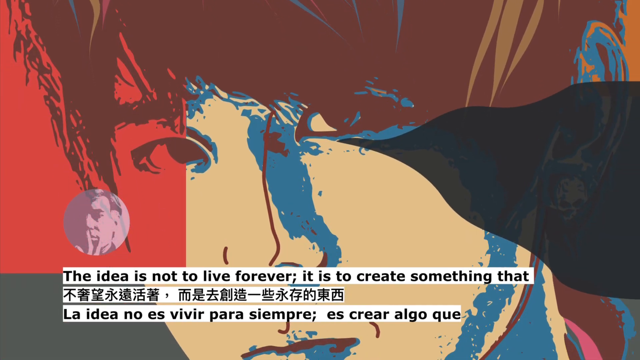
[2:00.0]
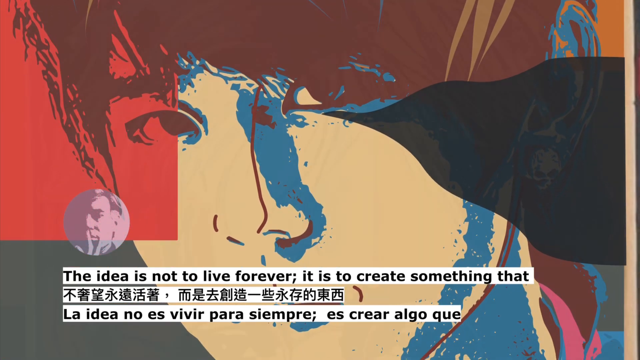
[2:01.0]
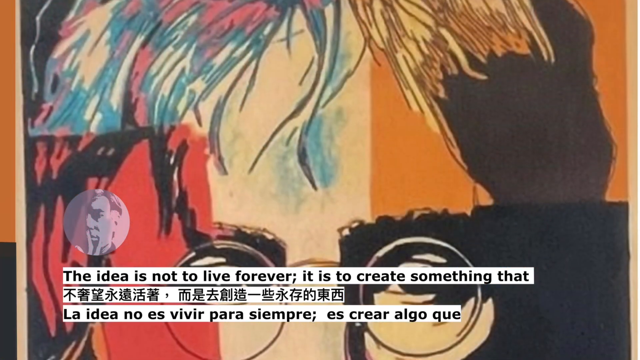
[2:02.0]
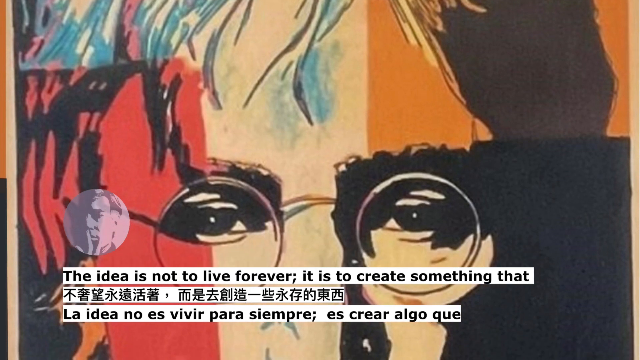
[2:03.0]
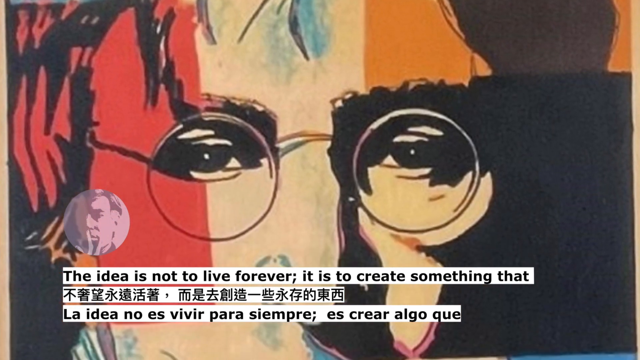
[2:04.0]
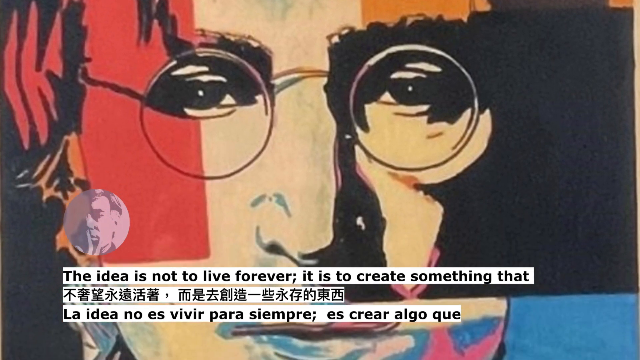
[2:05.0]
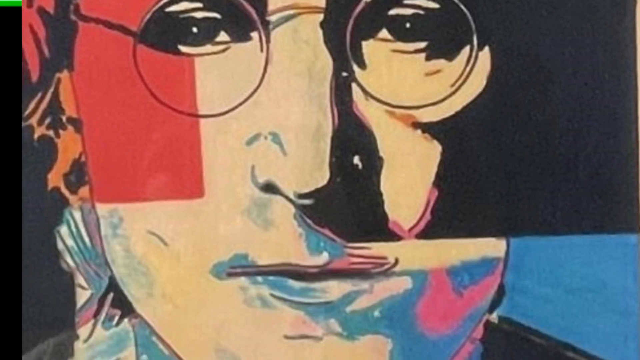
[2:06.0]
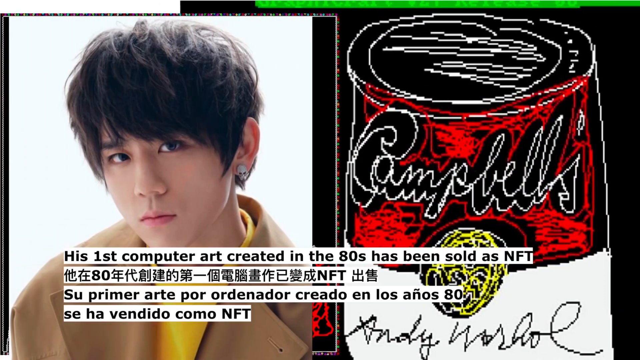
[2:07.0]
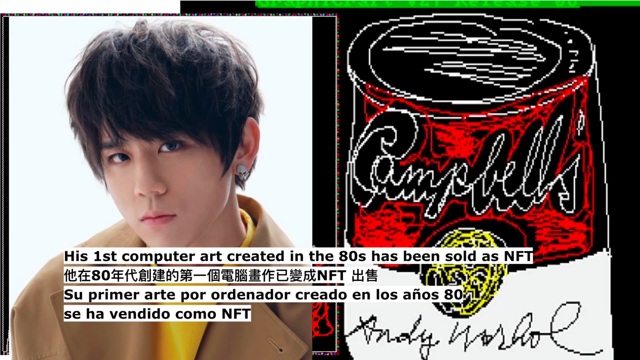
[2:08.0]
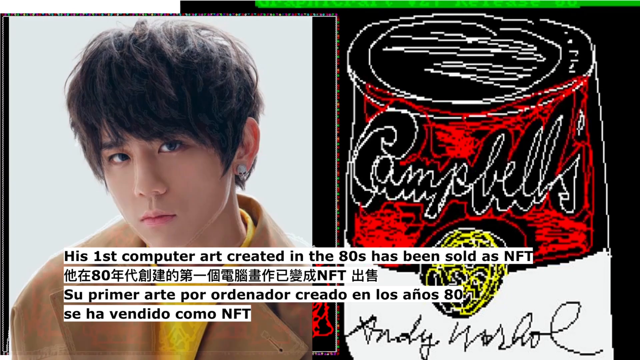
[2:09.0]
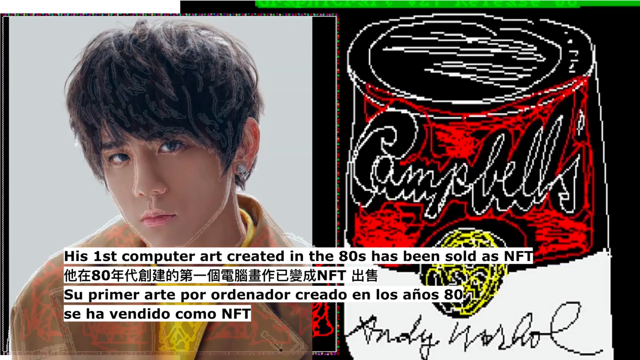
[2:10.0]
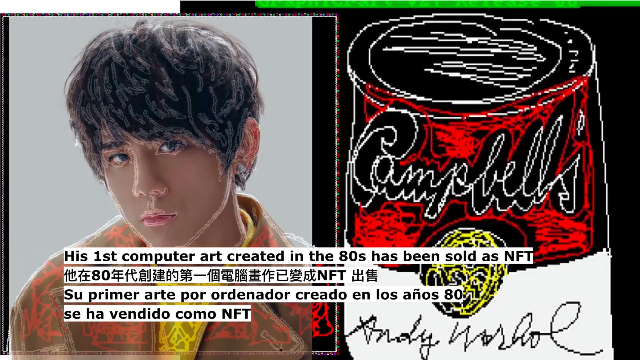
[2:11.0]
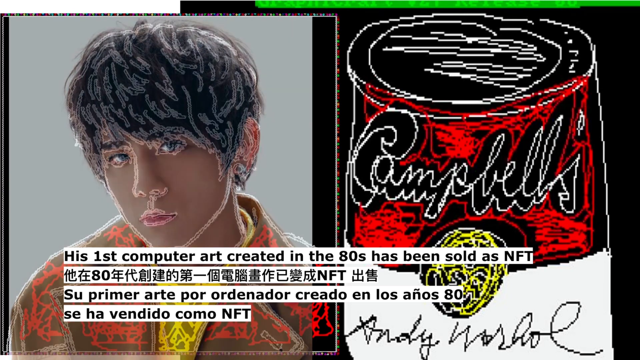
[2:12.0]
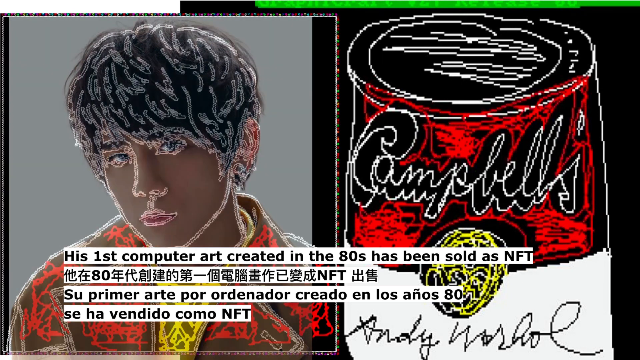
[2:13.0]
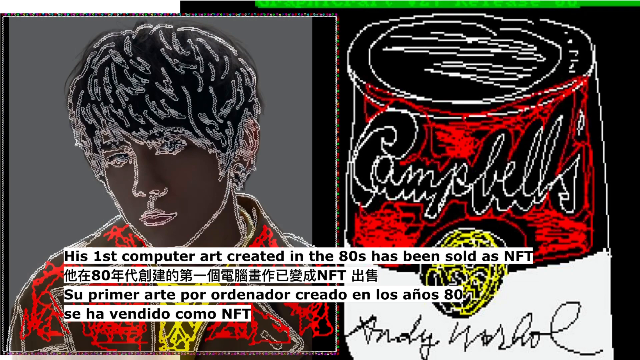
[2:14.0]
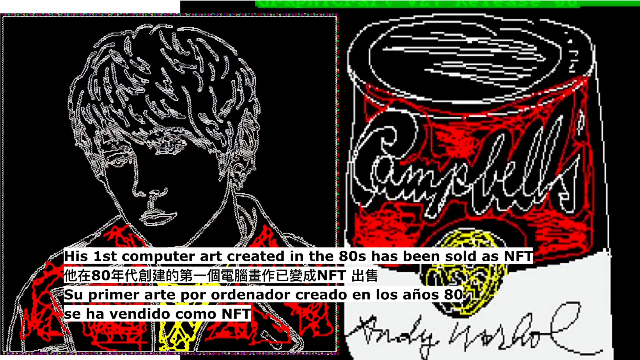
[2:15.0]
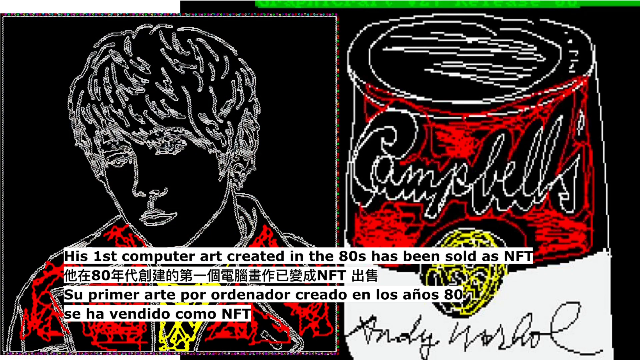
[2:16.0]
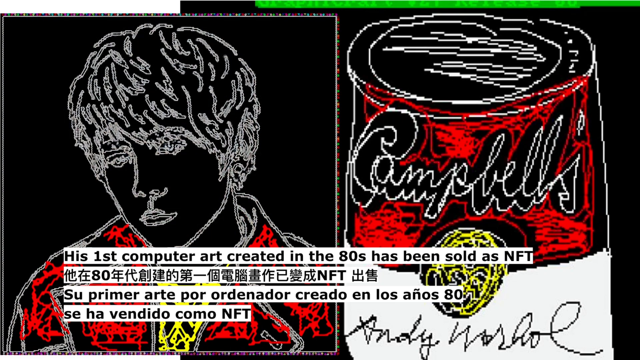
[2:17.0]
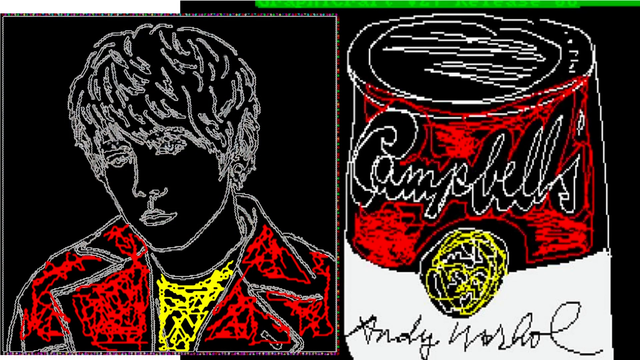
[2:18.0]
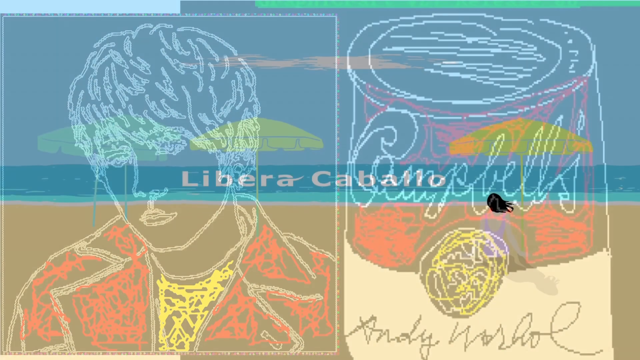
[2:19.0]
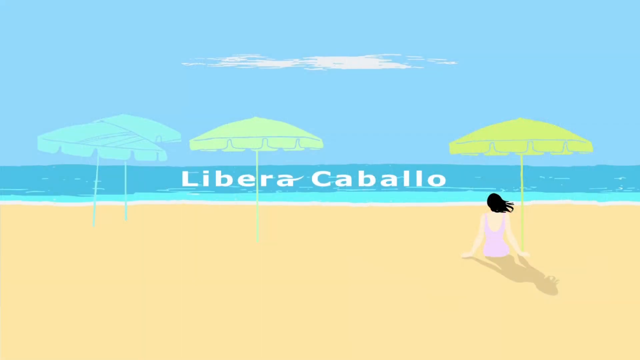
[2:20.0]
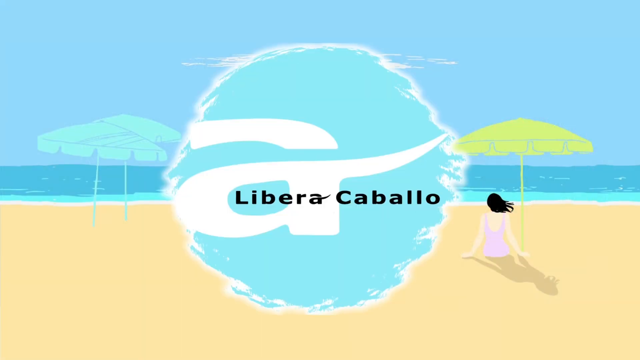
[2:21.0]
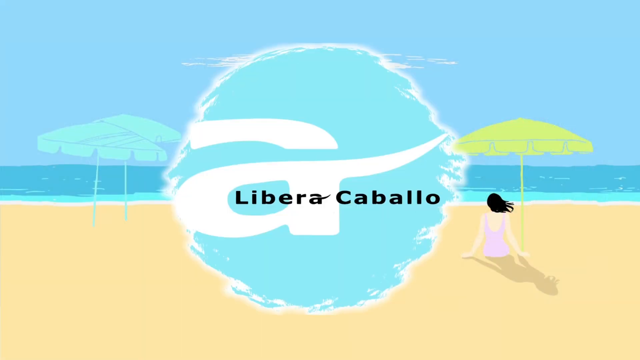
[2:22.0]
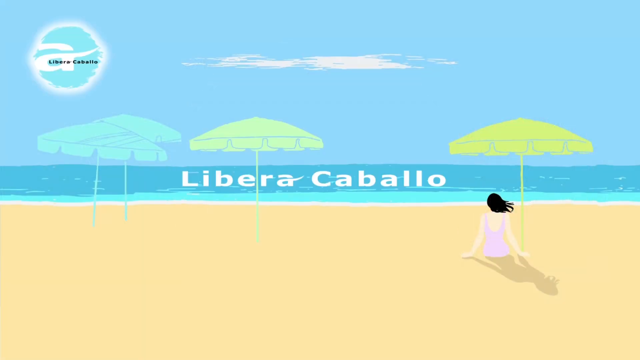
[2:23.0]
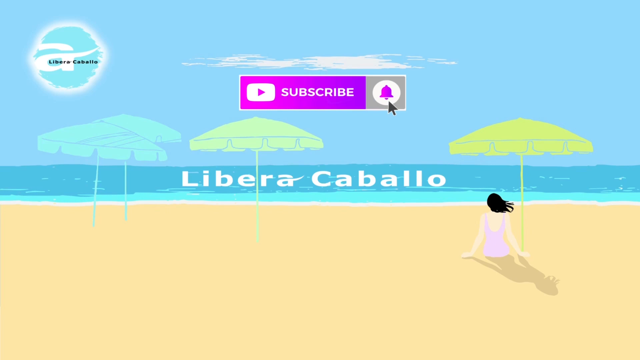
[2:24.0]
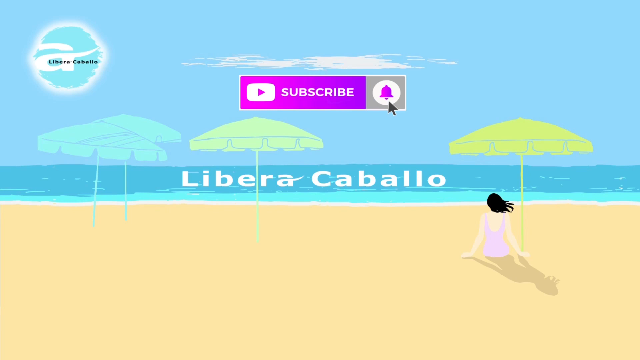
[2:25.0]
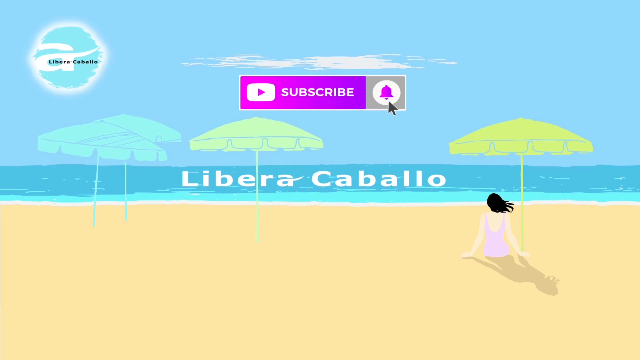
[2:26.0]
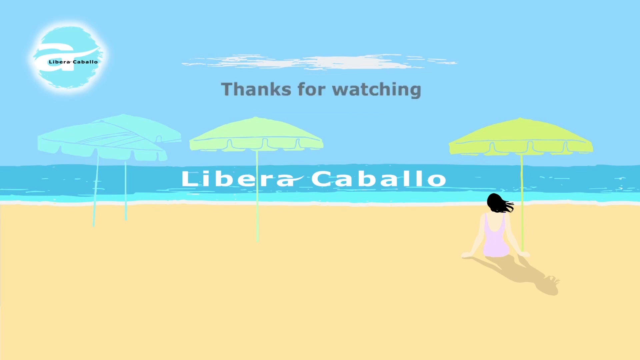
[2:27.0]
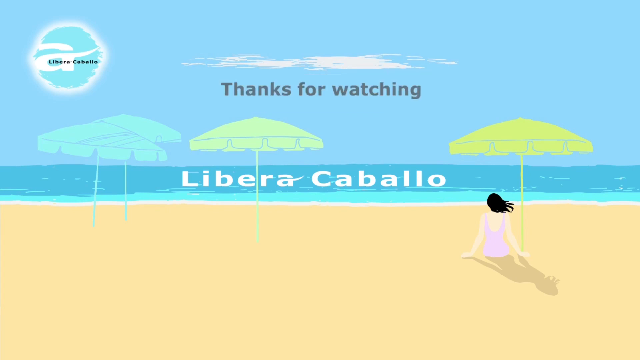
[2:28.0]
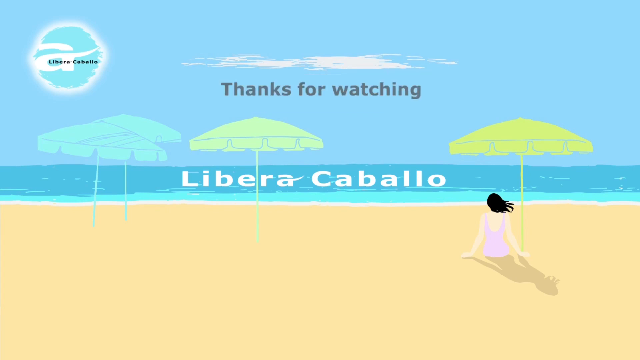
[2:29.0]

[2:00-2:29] An image of the Asian artist has black lettering underneath on a white background reading "the idea is not to live forever it is to create something that", with two separate languages below it reading the same thing. The purple circular outline of the artist's face is on the left. A red box on the left shows a black outline of the eyes, nose and mouth, yellow for the face, blue streak lines around the cheek, nose and right eye, and blue, red and beige colors on the hair. John Lennon with glasses is shown in a black outline in the same color variation, again with black wording on a white background reading "the idea is not to live forever it is to create something that" and the same wording in two separate languages underneath. The next image is an actual photograph of the Asian artist, with black hair, a roughly white complexion and black eyes; he has a silver skull on one of his ears and wears a yellow shirt and a light brown coat. Black lettering underneath on a white background reads "his first computer art created in the 80s has been sold as NFT". There is a white outline of a Campbell's soup can on a black background mixed with red, yellow circle lines, and "Andy Warhol" in black lettering on a white background at the bottom. This fades from color to black and white, with the jacket red and the inside shirt yellow with a white chalked outline. The next image is a cartoon of a yellow beach with a woman on the right side who has black hair and a pink swimsuit, a yellow umbrella beside her, and a gray shadow cast behind her. Three other umbrellas are to the left side, one green and the other two faded blue. There is a white outline of the beach, then light blue and then darker blue for the water, a lighter shade of blue for the sky, and a white cloud in the center. In the center of the water, white text reads "Liberia Cabela". A teal blue circle with a white outline has what looks like a white A in the center, with black lettering reading "Liberia Cabela". A pink square box reads "subscribe" in white lettering, there is a white box with a pink arrow, a black arrow over a white circle with a pink bell on a gray background, and black text in the center reads "thanks for watching".